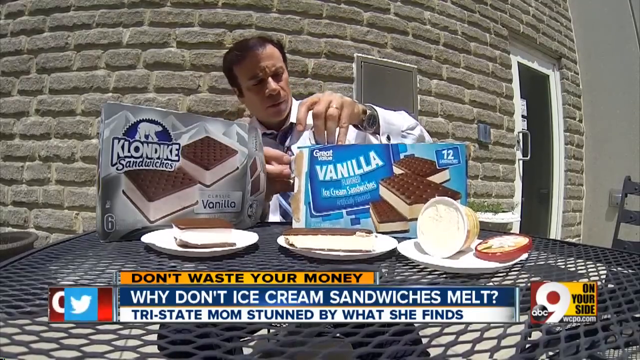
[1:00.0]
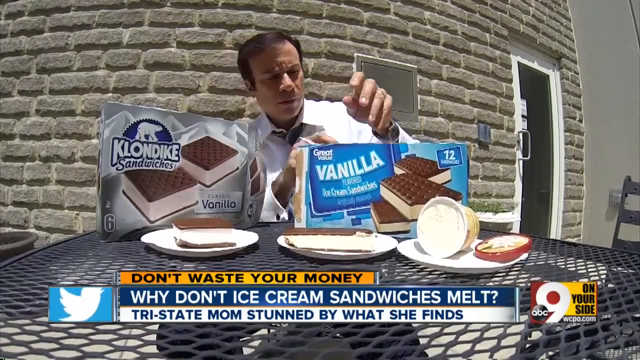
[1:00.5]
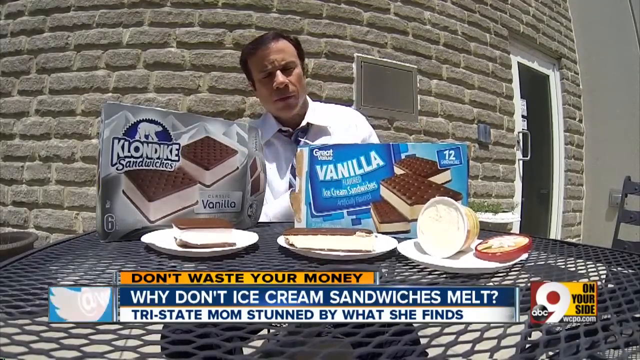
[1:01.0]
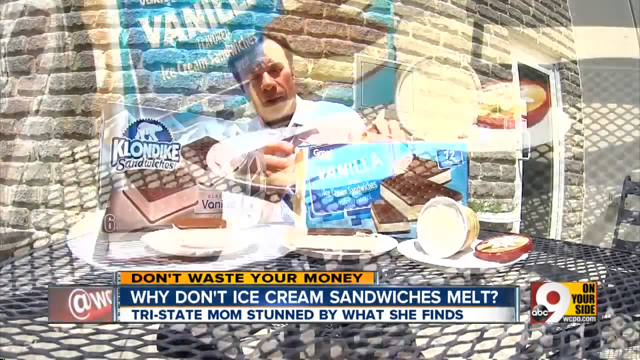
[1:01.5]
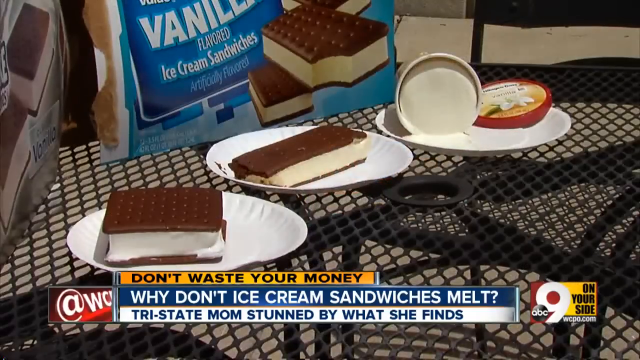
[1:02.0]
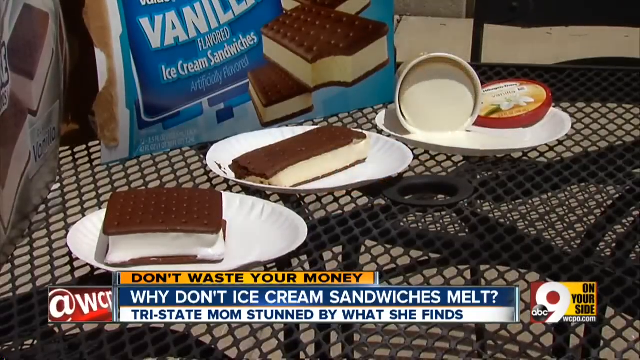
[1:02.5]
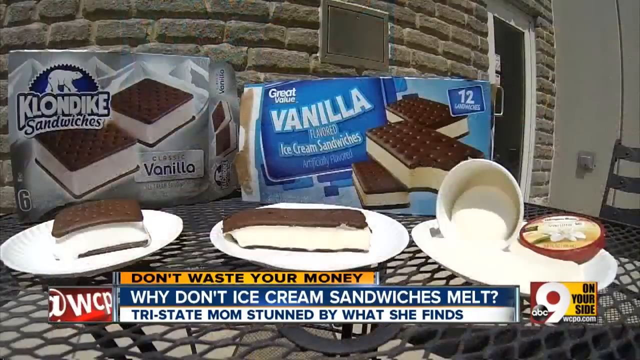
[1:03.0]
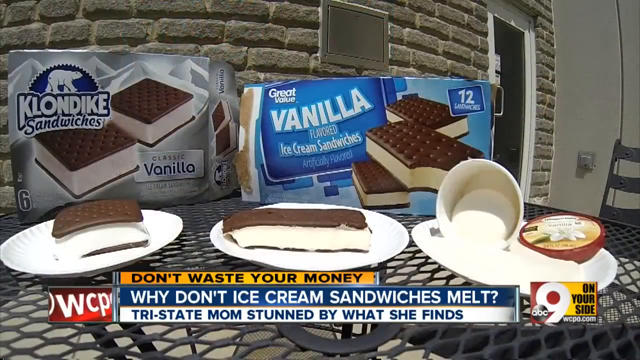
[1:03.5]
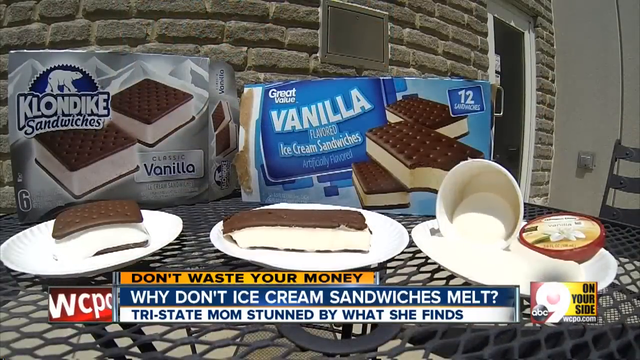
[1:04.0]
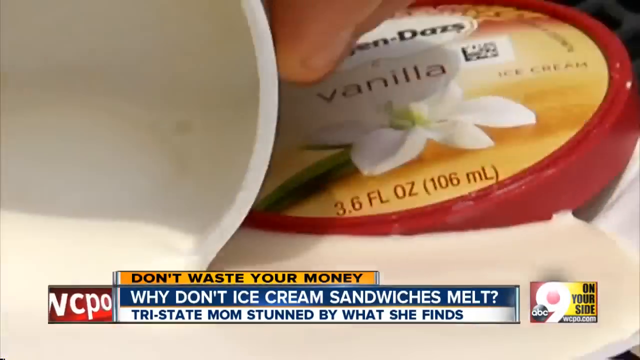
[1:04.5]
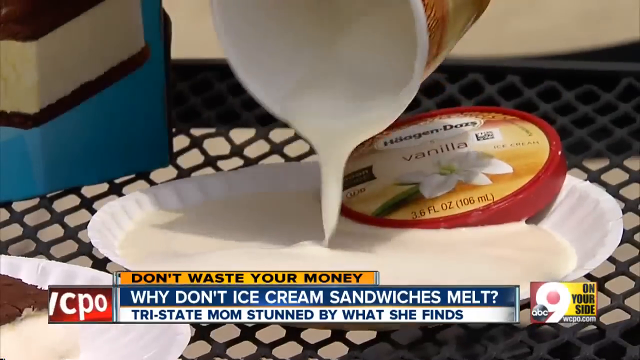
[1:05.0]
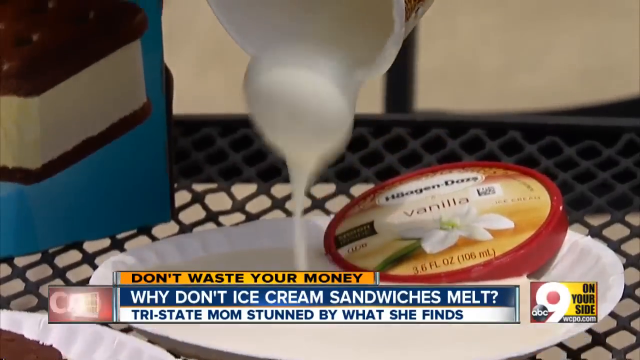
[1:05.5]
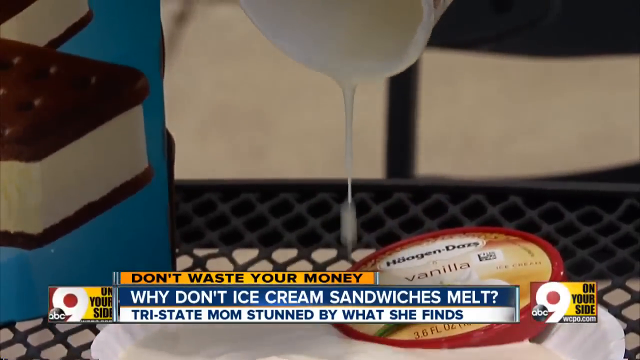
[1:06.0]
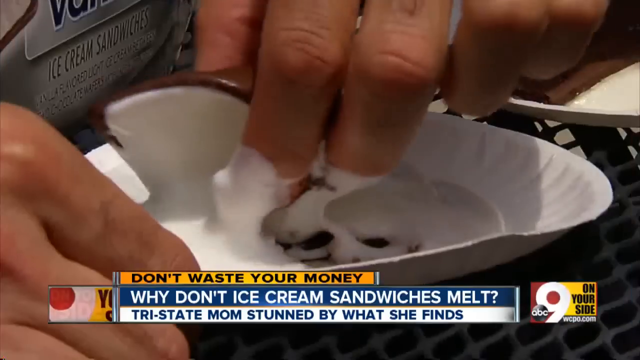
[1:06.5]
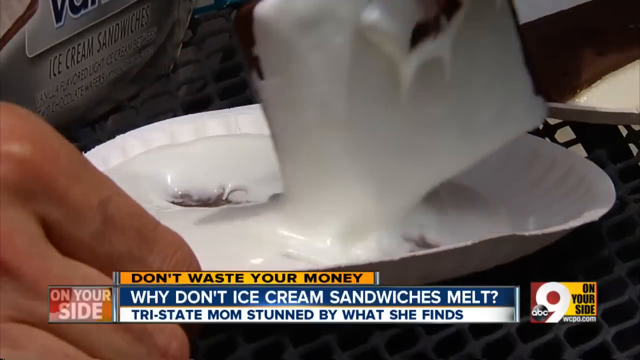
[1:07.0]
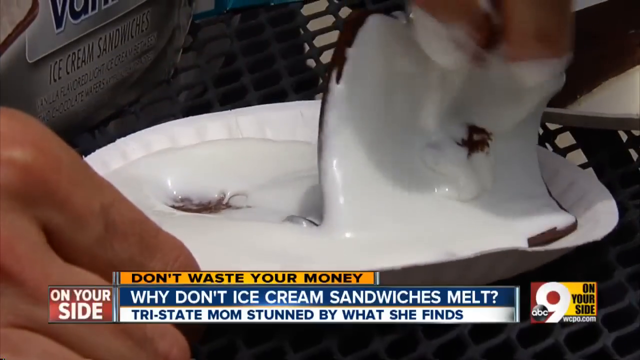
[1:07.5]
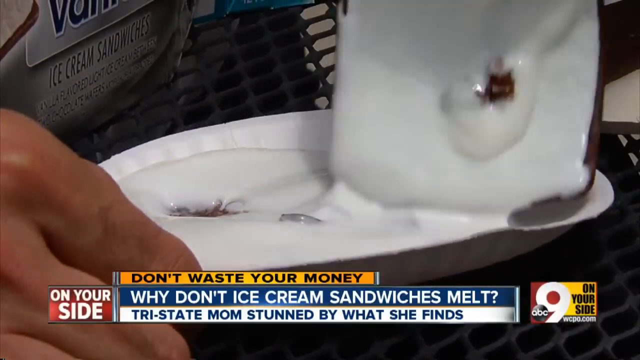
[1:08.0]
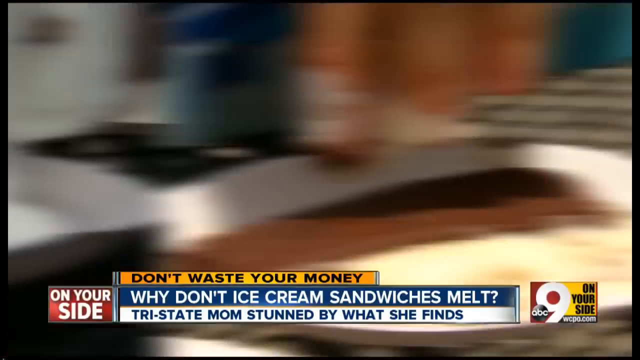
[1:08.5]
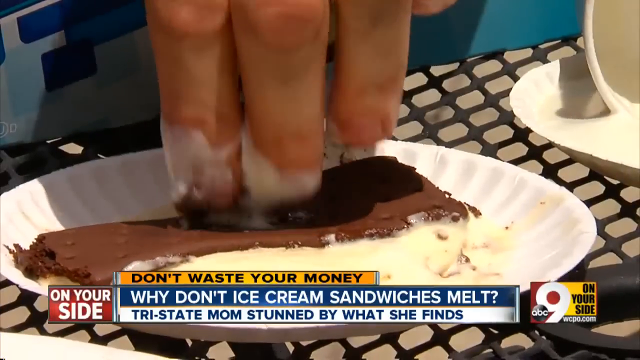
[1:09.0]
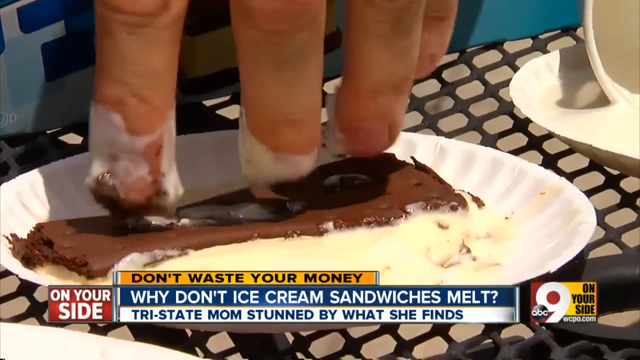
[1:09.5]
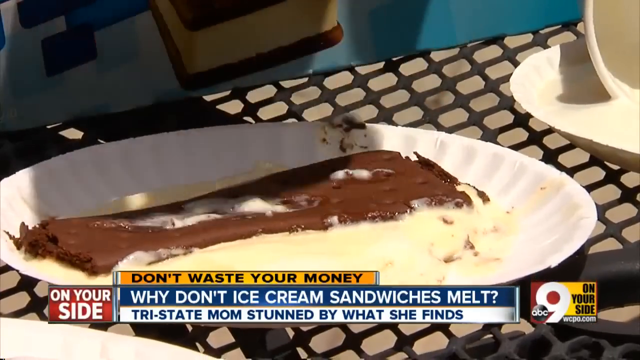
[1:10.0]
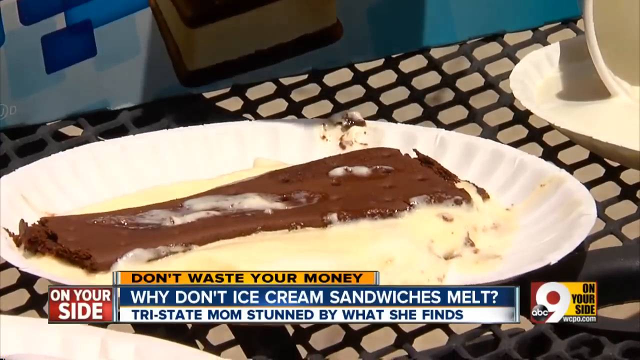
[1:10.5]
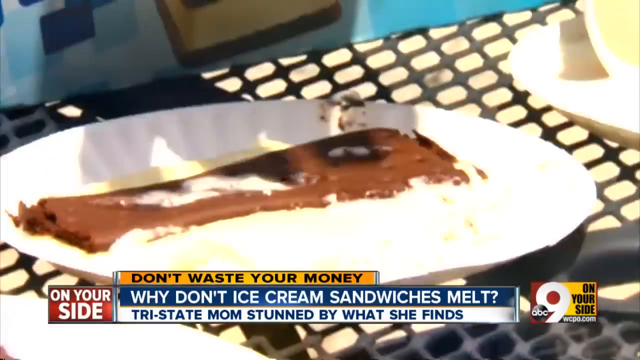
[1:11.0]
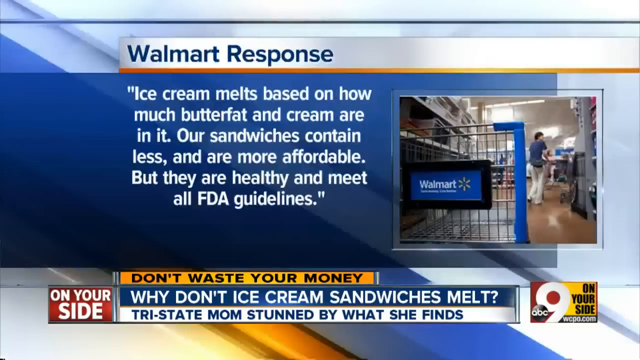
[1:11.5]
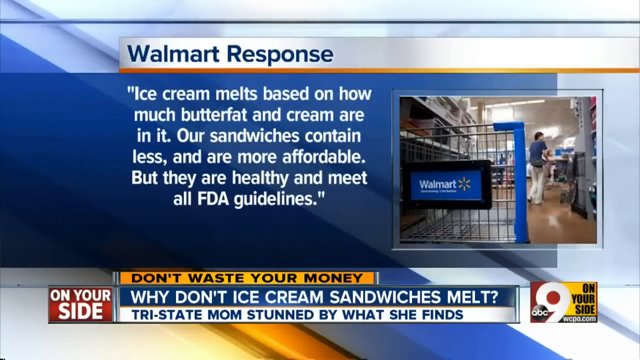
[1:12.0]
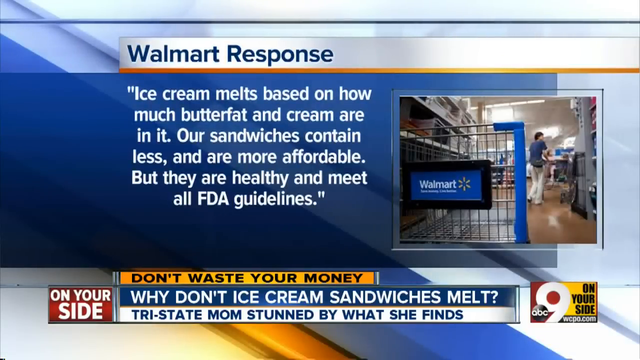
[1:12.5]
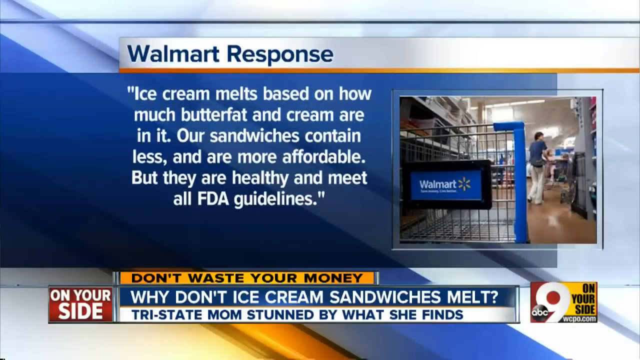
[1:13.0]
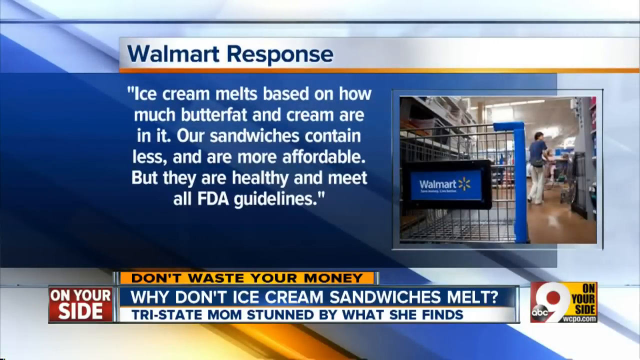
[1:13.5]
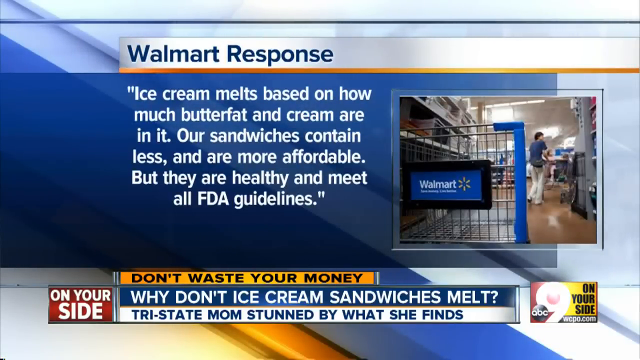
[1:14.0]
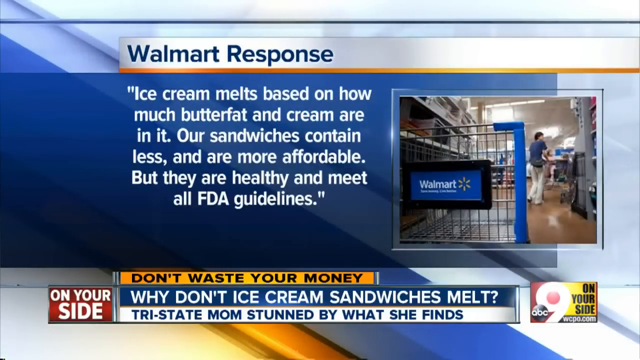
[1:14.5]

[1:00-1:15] A Caucasian man sits at an outdoor picnic table that looks like it is made of black wire mesh, wearing a white button-down shirt and a black tie. In front of him are two boxes of ice cream sandwiches: a silver box reading "Klondike" on the left and a blue box reading simply "ice cream sandwiches" on the right. He places ice cream sandwiches on two small white paper plates in front of him to see if they will melt. There is also a plate with what looks like a half pint of vanilla ice cream melting on it. The man looks perplexed and pokes the sandwiches to see if they have melted. A graphic at the bottom reads "don't waste your money. Why don't ice cream sandwiches melt anymore? Tristate mom's stunned by what she finds," with small squares reading "WCPO 9 on your side" on both the left and right. The video then cuts to a blue screen reading "Walmart response," with black text underneath: "ice cream melts based on how much butter, fat, and cream are in the ice cream."